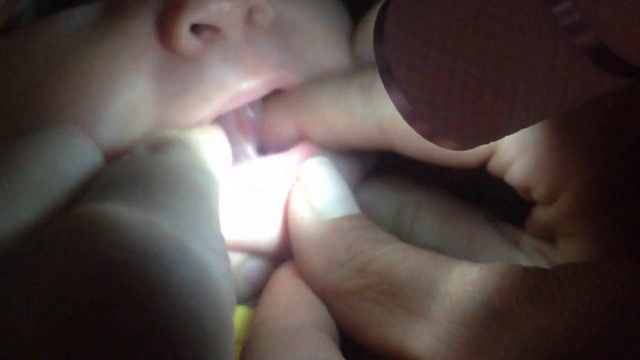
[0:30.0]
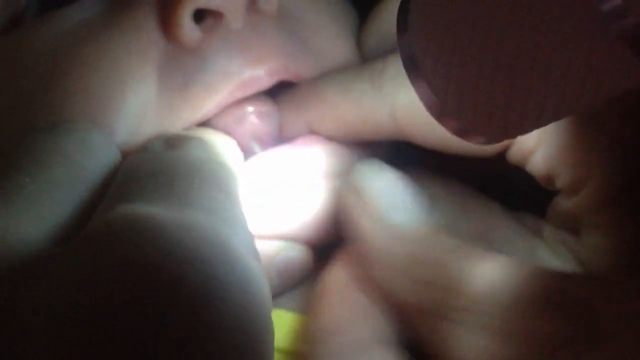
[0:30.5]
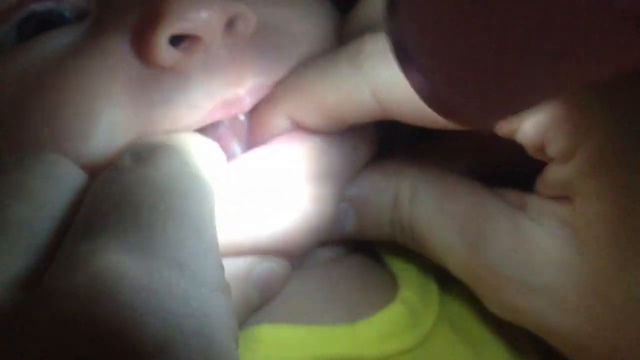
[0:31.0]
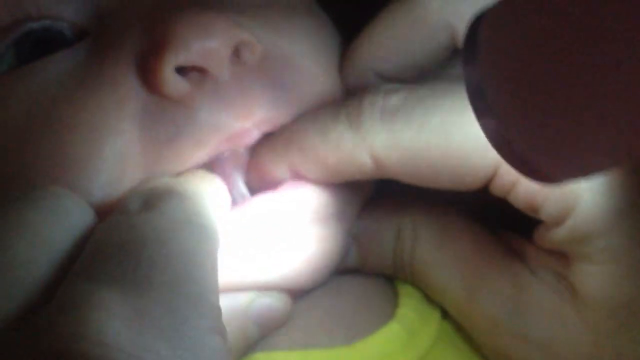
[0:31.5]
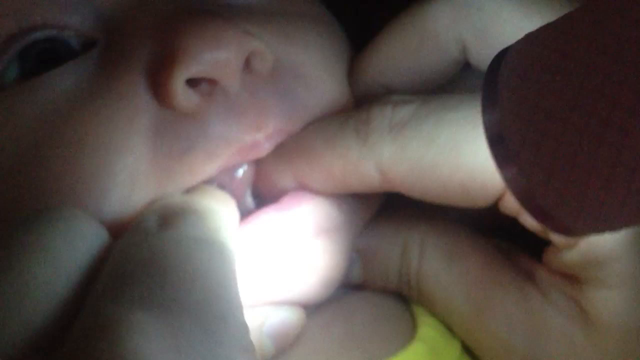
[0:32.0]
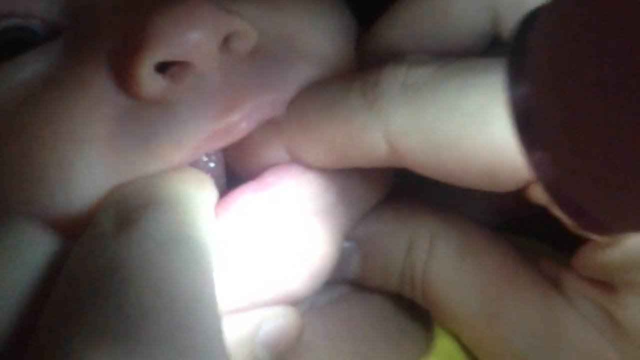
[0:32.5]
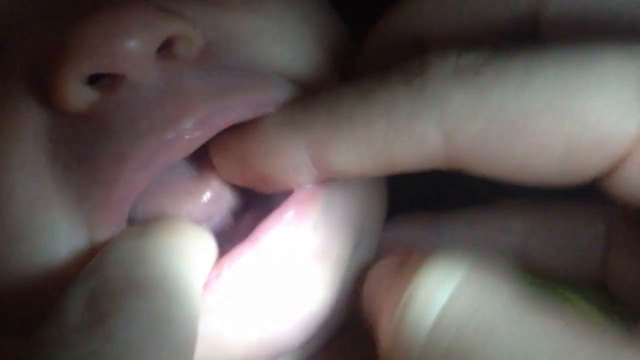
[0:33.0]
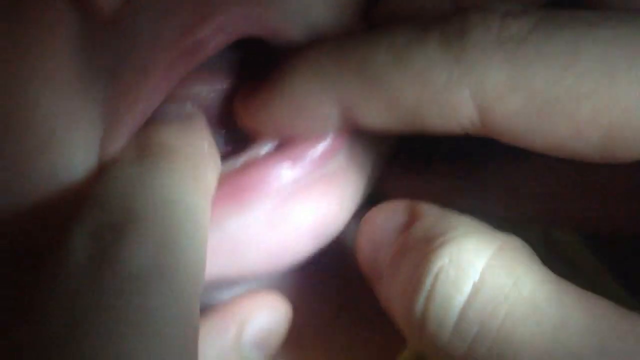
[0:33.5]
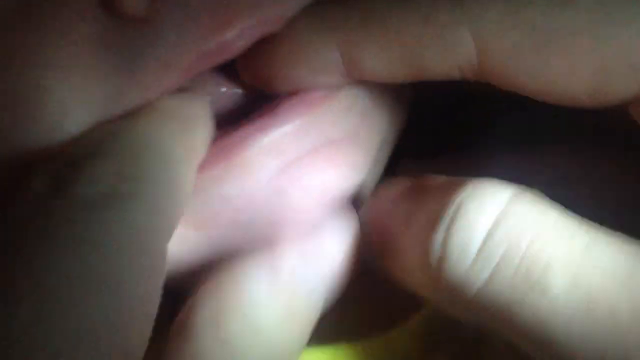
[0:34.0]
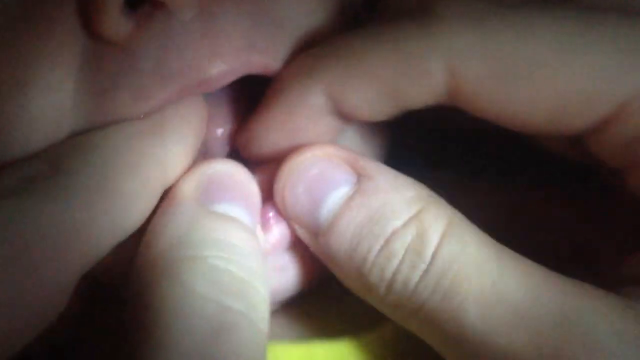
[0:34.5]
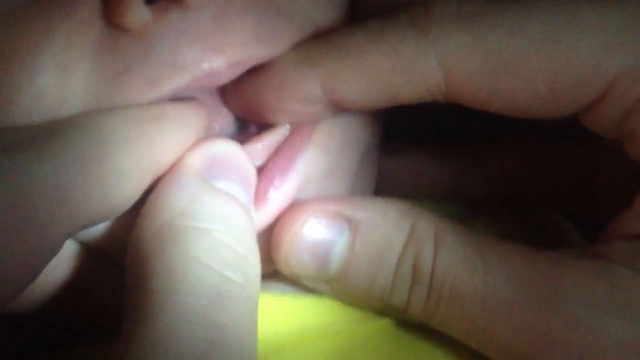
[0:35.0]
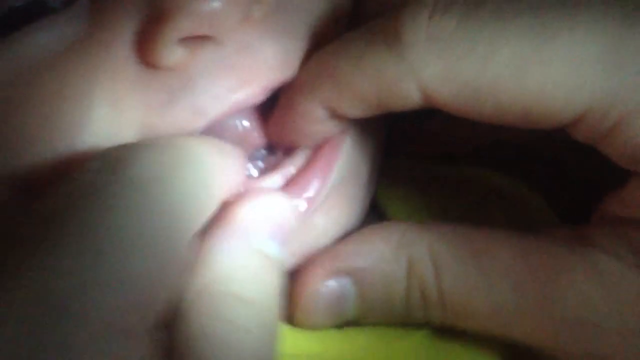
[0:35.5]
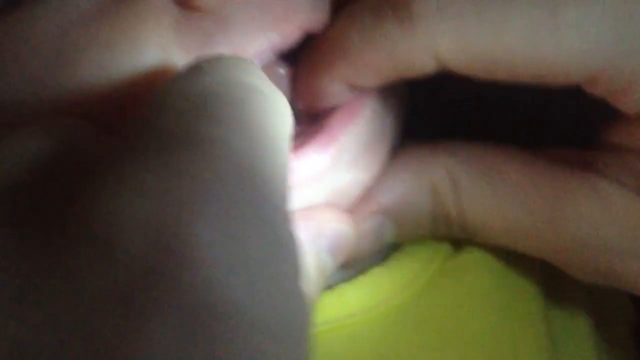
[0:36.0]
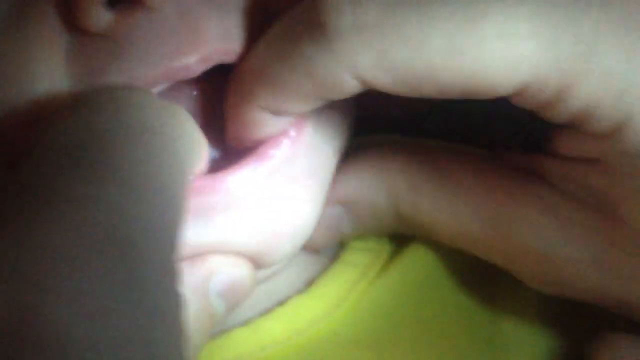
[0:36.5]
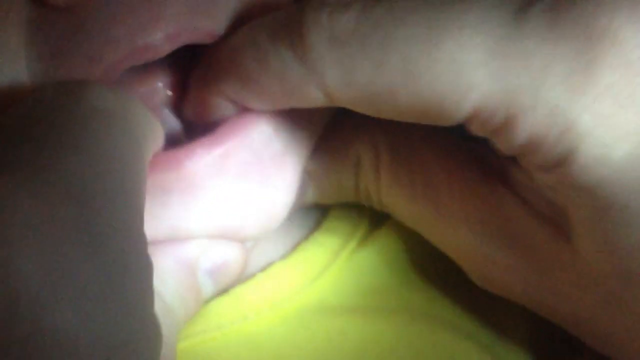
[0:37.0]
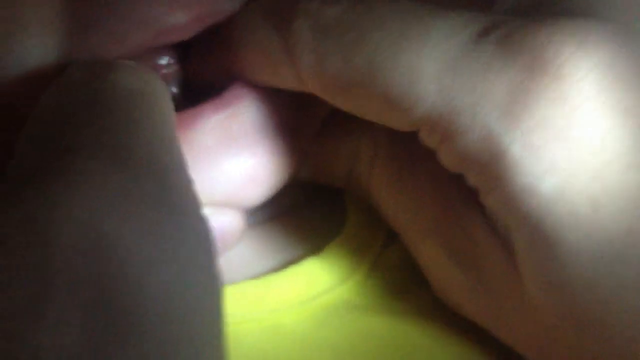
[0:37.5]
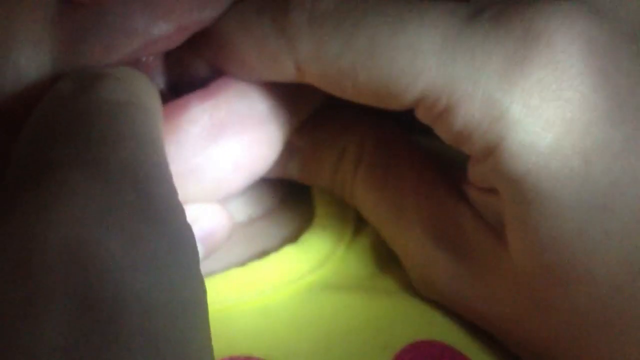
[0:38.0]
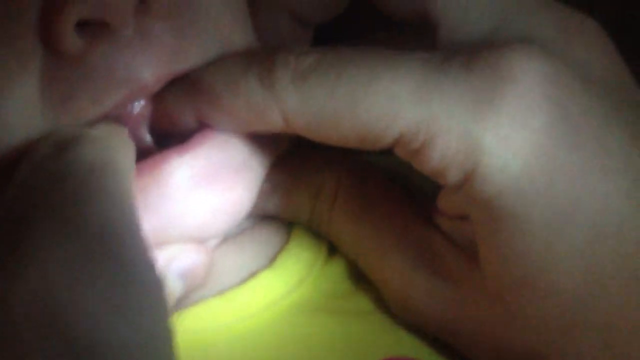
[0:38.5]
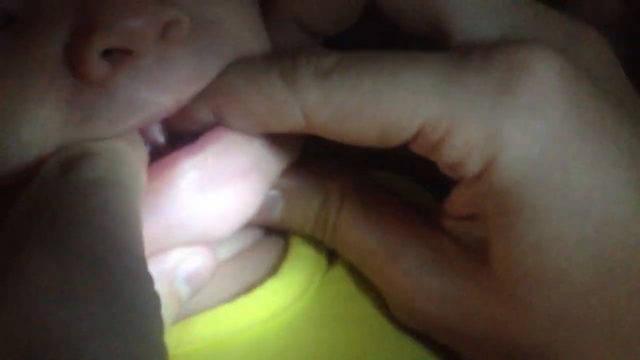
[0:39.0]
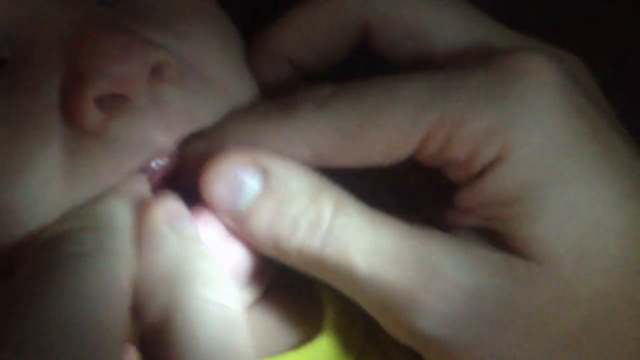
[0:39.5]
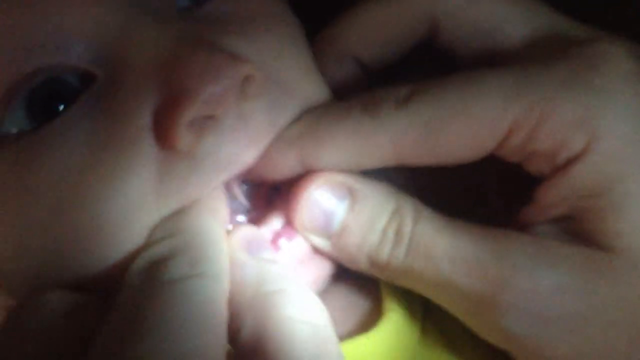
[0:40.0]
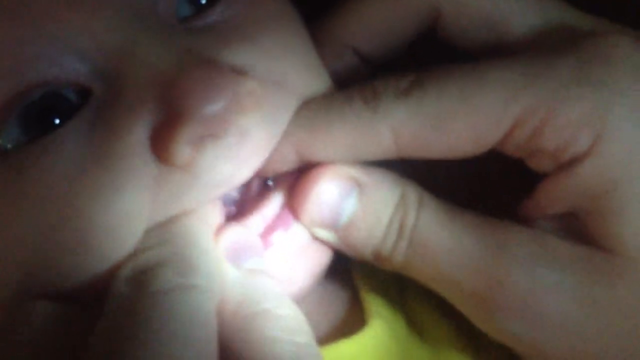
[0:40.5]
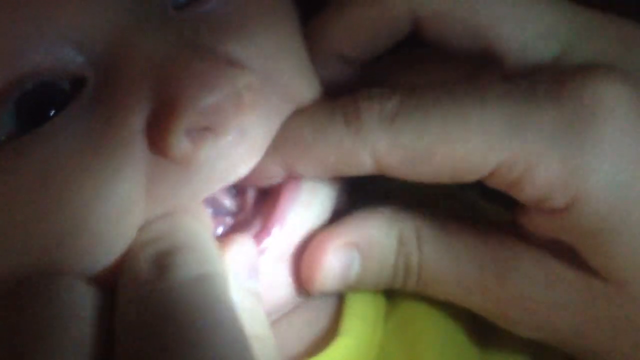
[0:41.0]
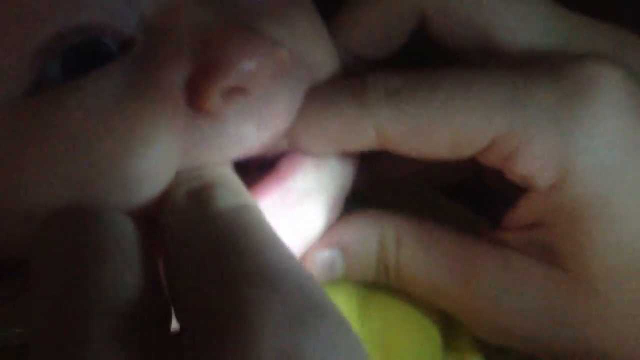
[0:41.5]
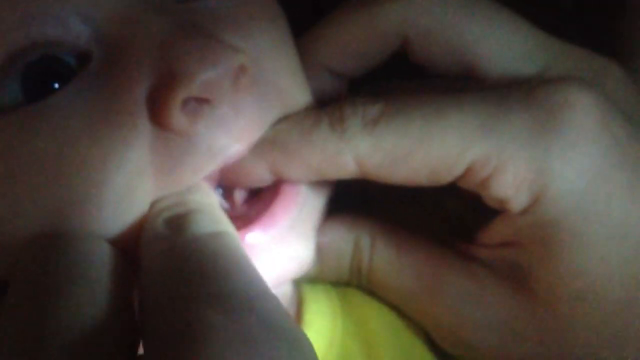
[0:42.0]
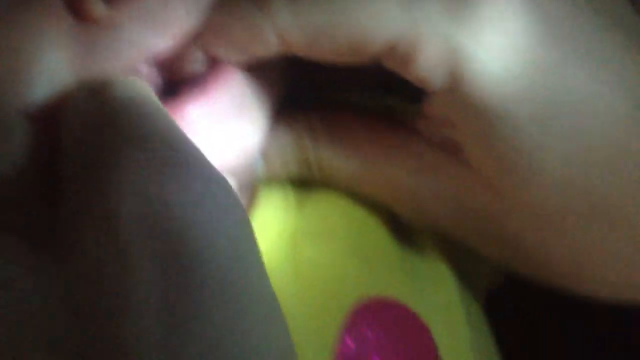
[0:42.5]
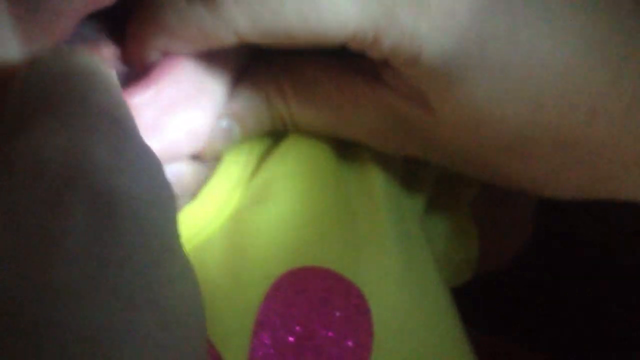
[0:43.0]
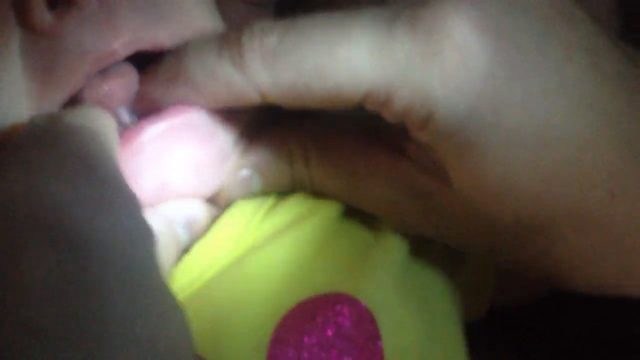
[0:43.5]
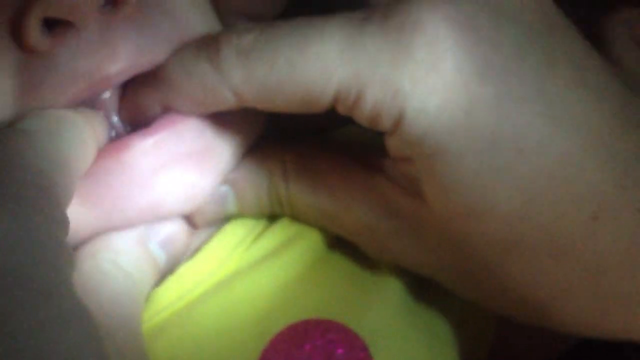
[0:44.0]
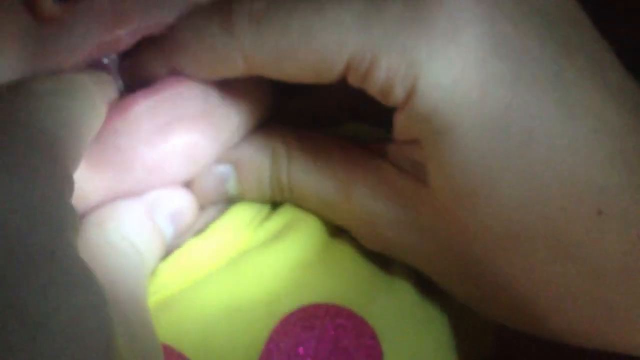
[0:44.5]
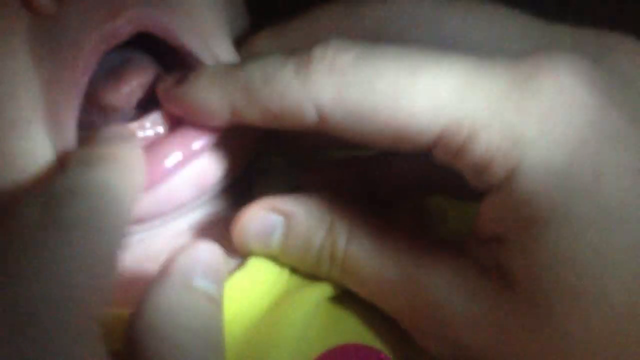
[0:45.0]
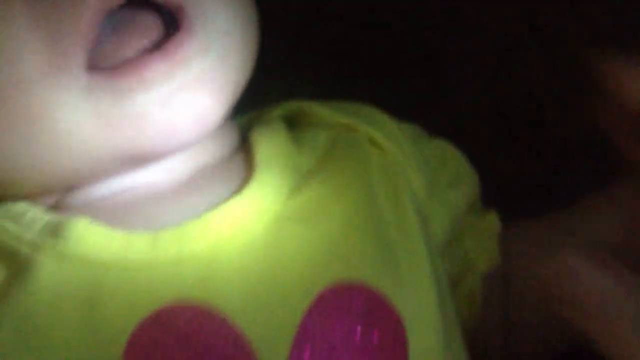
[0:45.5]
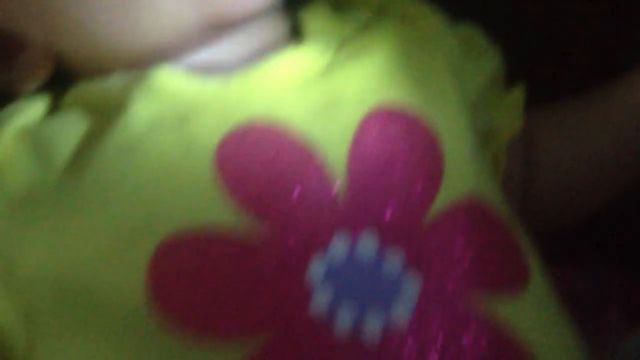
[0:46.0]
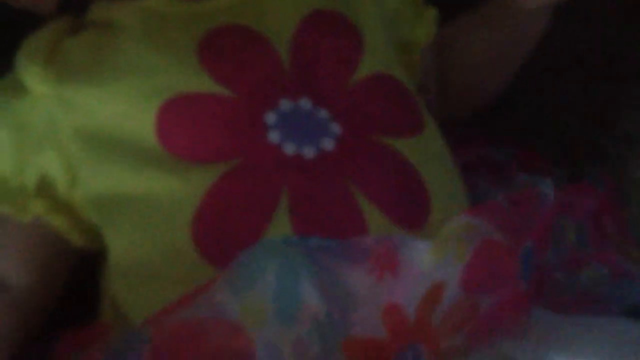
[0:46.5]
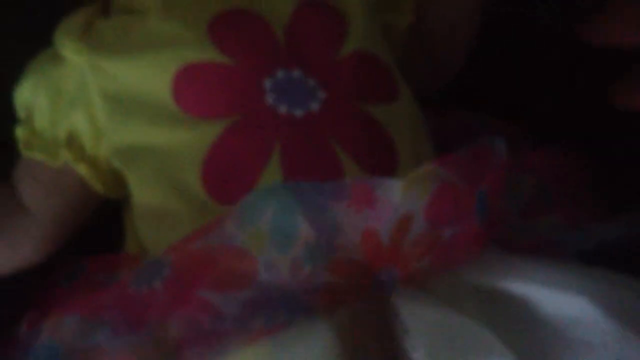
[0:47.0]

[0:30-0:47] The inside of a small baby's mouth is examined in close-up. The baby has its mouth open, and someone has their two index fingers in it, apparently holding the left and right sides of the baby's tongue, while there seems to be another person shining a small flashlight into the mouth. The camera kind of moves closer to zoom in. The person seems to be kind of putting an index finger underneath the baby's tongue, touching the very bottom of the mouth. The baby kind of makes a chewing motion with its mouth. With the index fingers still in the baby's mouth, the hands use a thumb to pull down the bottom lip and look at the bottom gums, which seem to have a row of white teeth. They then take the thumbs out of the baby's mouth and kind of hold both of them under the baby's chin, before removing their fingers and backing away from the baby. The baby is wearing a short-sleeve yellow shirt with a glittery pink flower in the middle and a fluffy white skirt with pink and blue flowers on it.